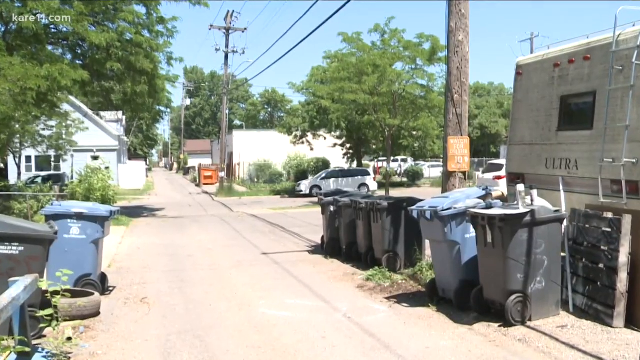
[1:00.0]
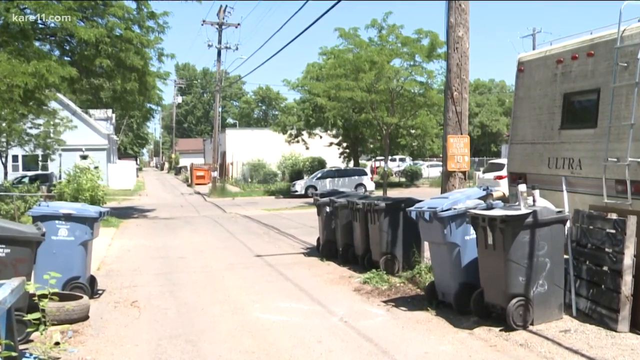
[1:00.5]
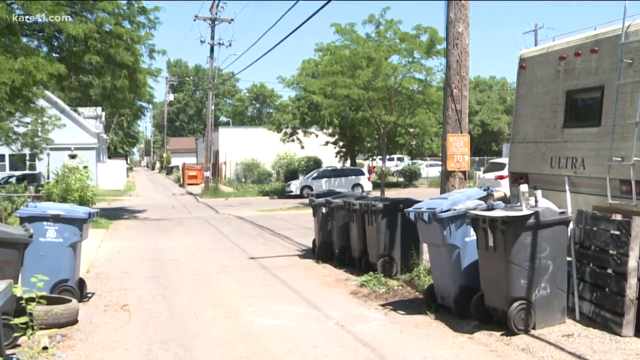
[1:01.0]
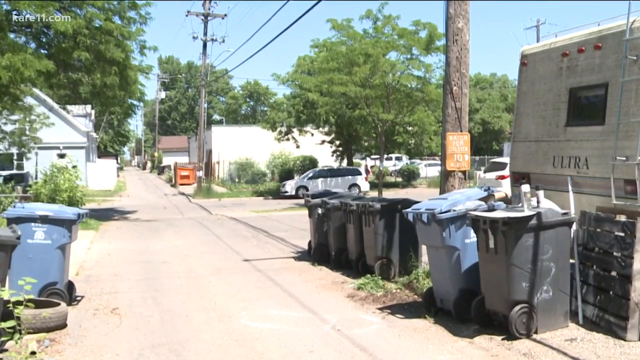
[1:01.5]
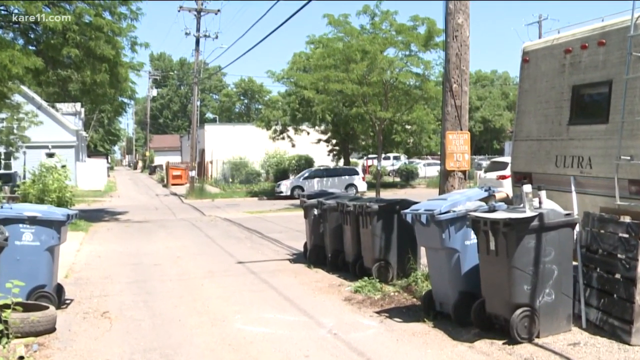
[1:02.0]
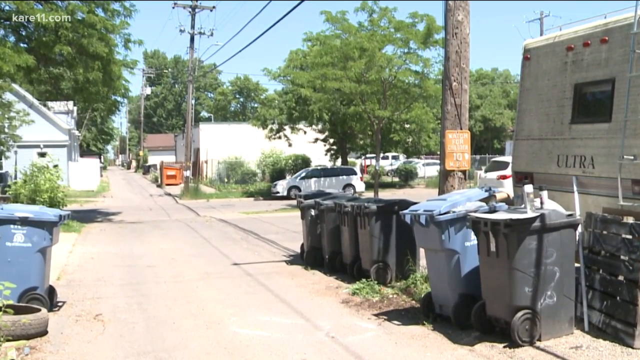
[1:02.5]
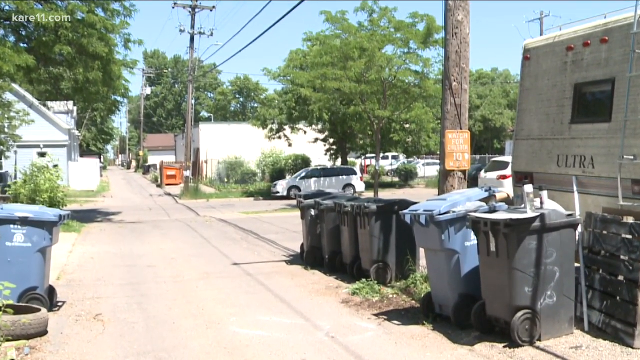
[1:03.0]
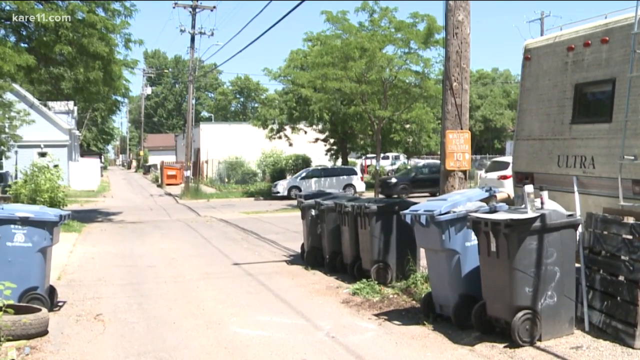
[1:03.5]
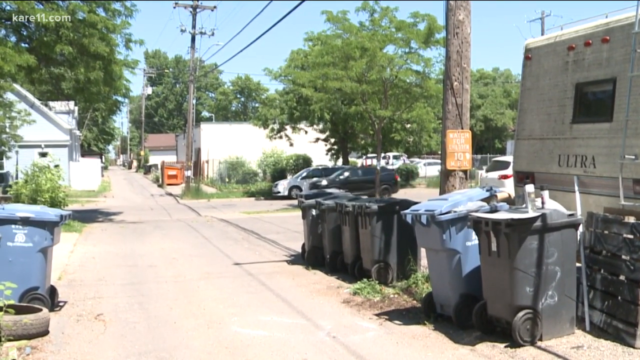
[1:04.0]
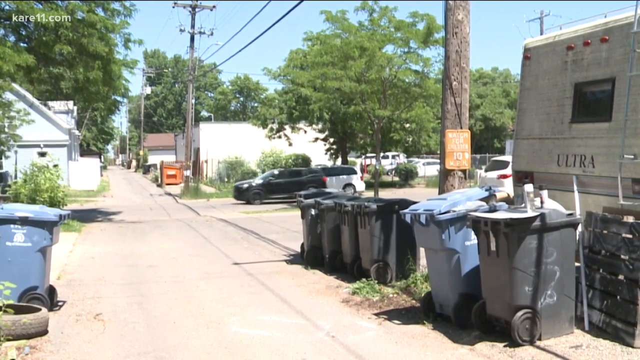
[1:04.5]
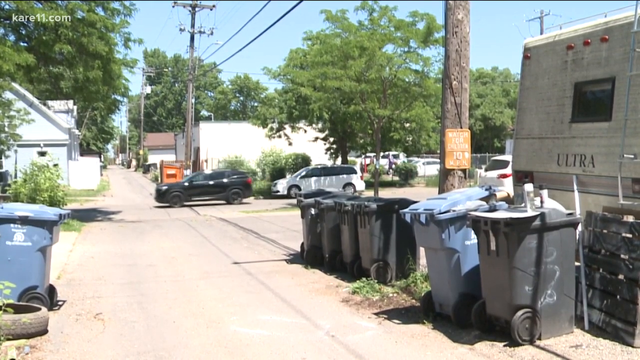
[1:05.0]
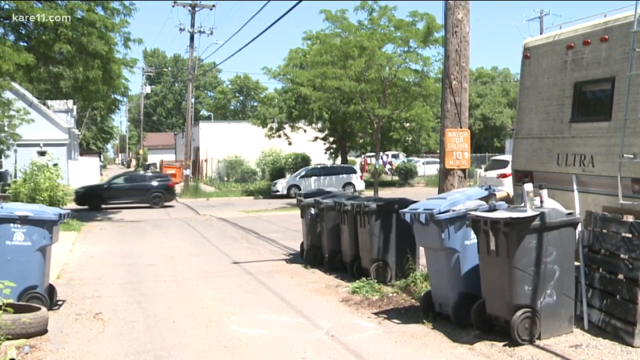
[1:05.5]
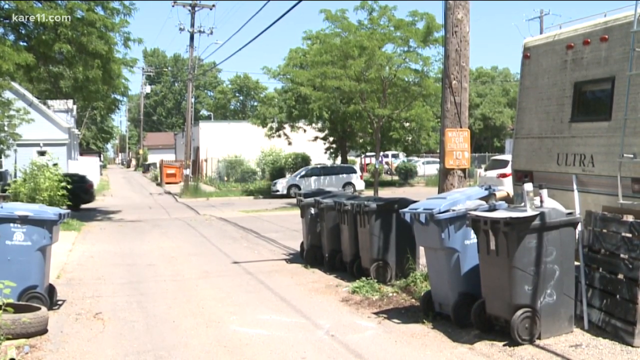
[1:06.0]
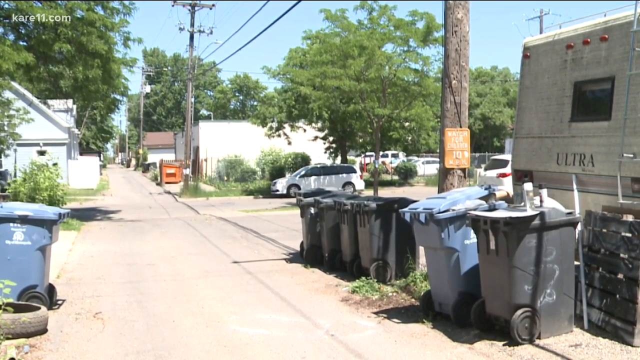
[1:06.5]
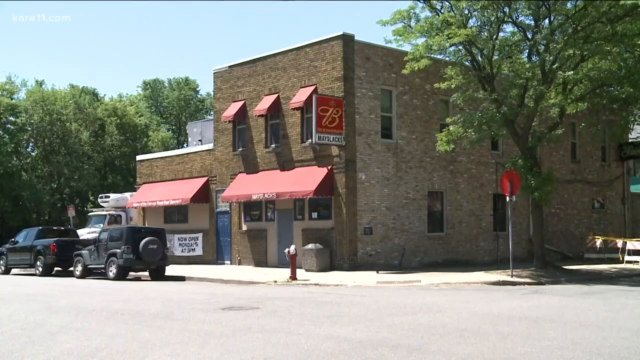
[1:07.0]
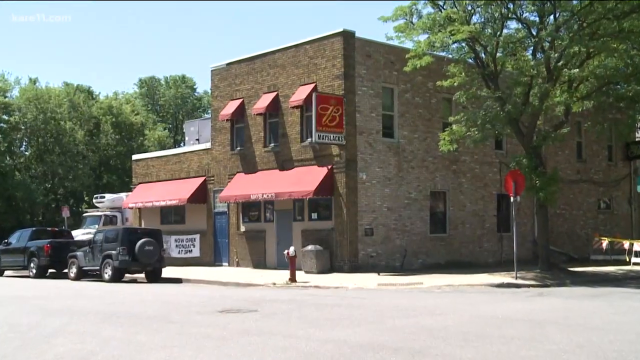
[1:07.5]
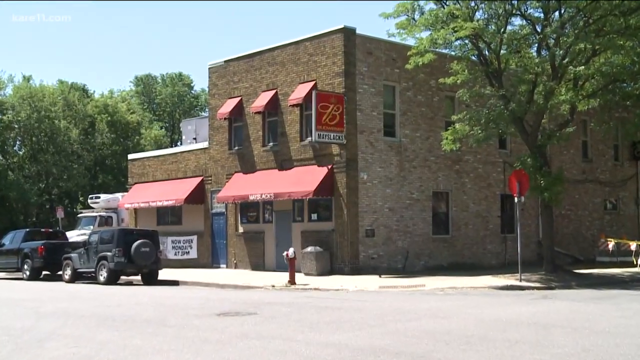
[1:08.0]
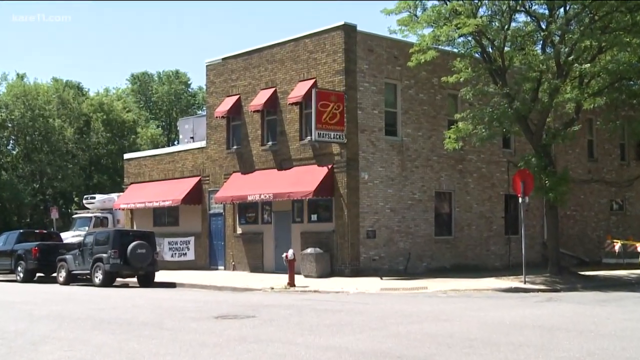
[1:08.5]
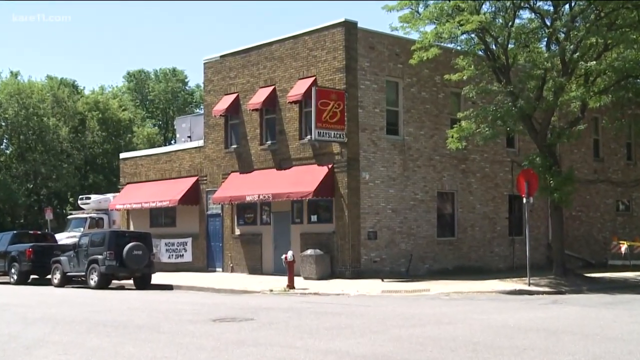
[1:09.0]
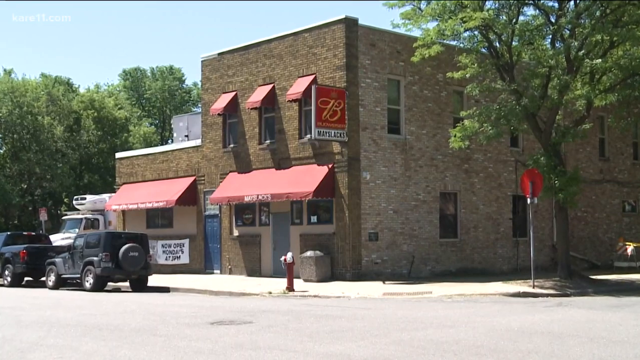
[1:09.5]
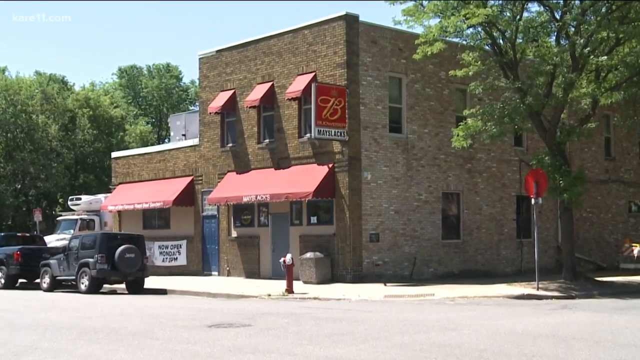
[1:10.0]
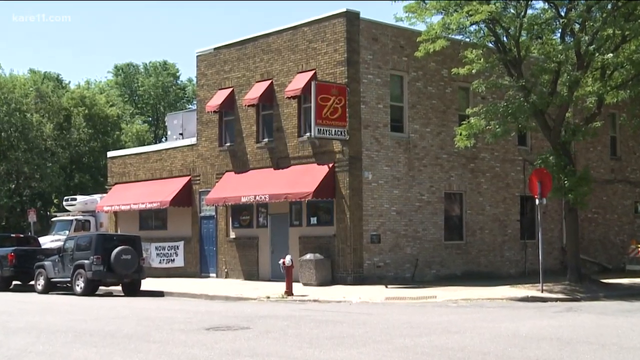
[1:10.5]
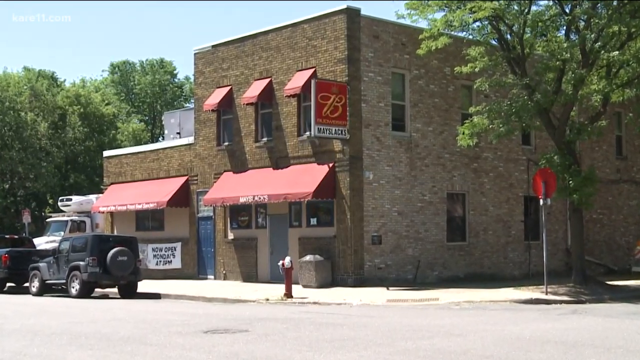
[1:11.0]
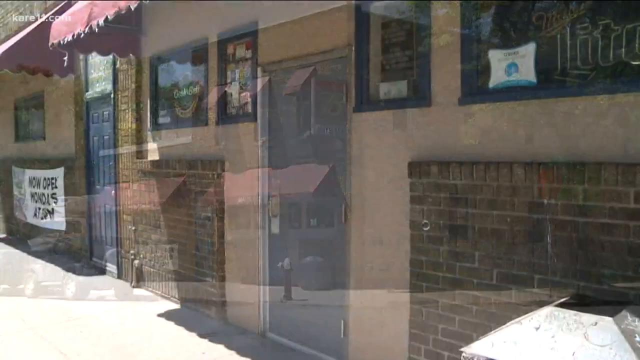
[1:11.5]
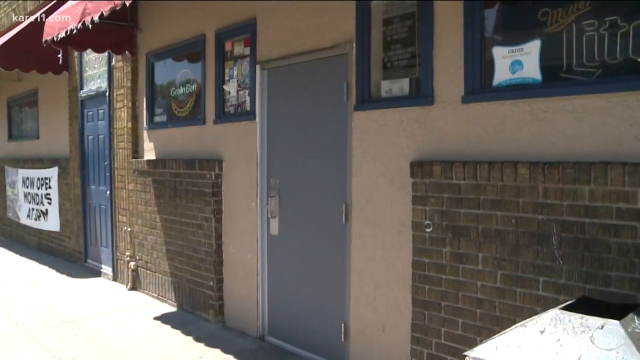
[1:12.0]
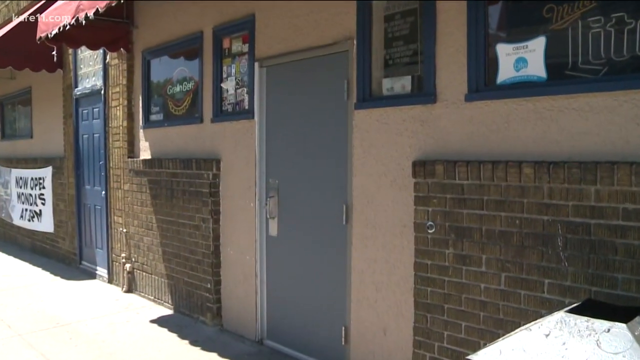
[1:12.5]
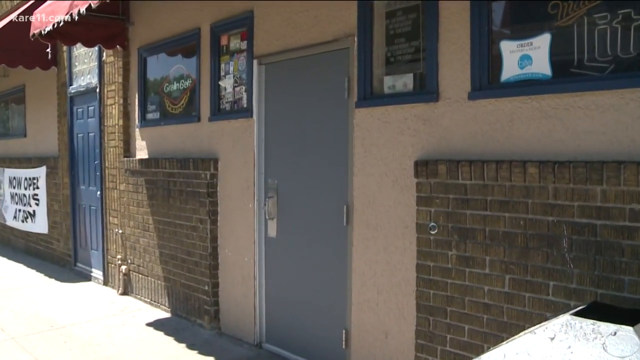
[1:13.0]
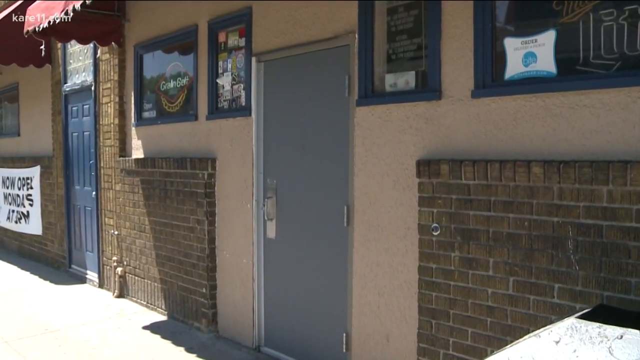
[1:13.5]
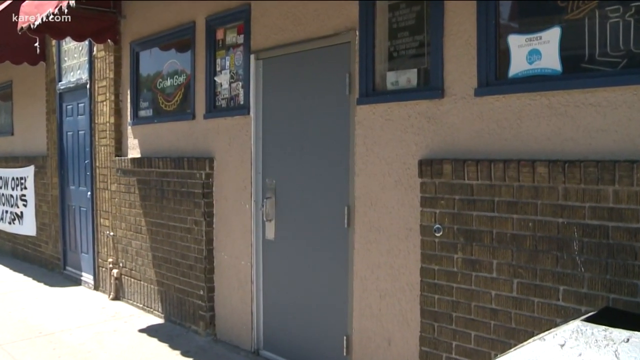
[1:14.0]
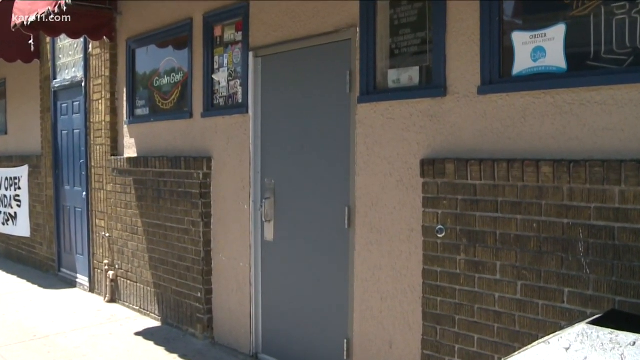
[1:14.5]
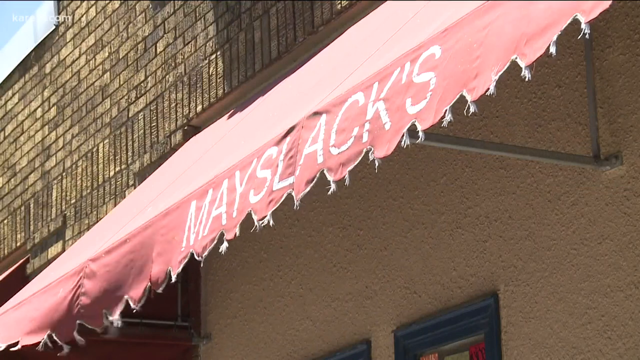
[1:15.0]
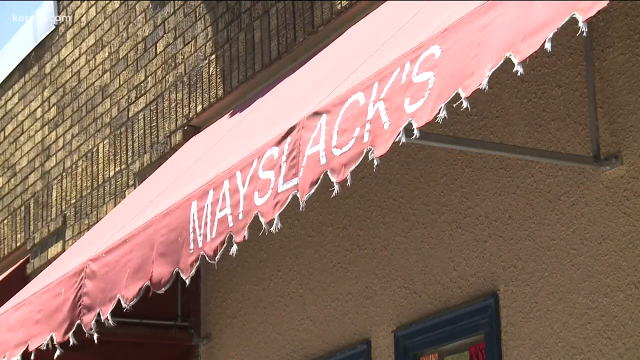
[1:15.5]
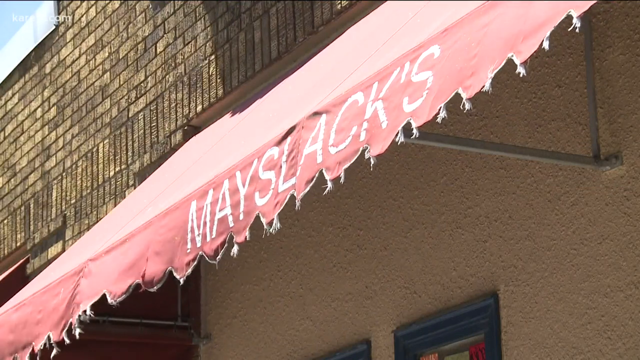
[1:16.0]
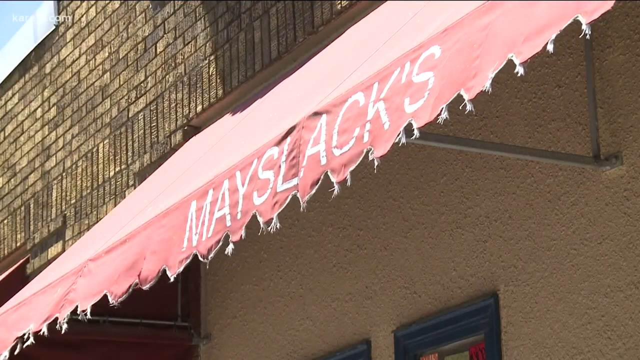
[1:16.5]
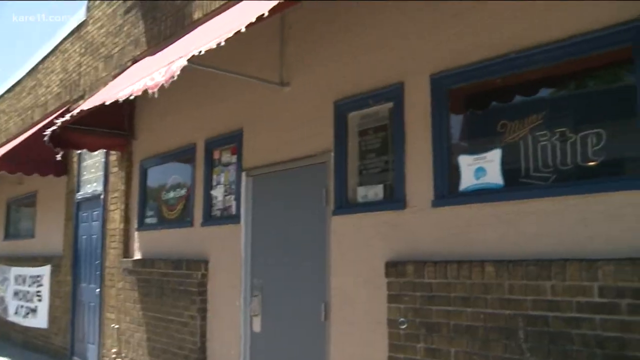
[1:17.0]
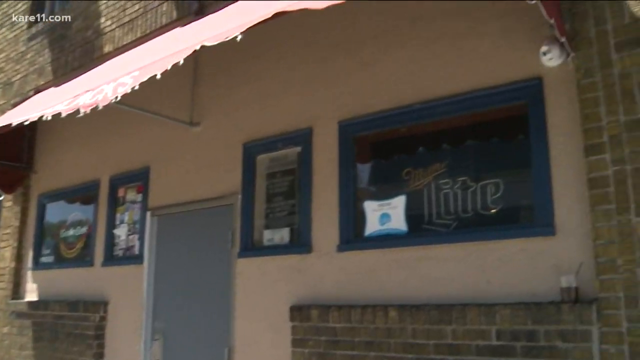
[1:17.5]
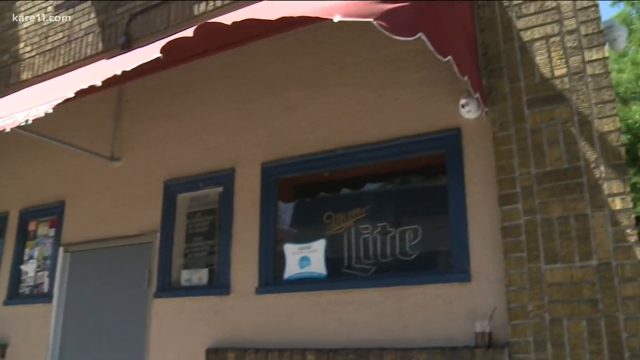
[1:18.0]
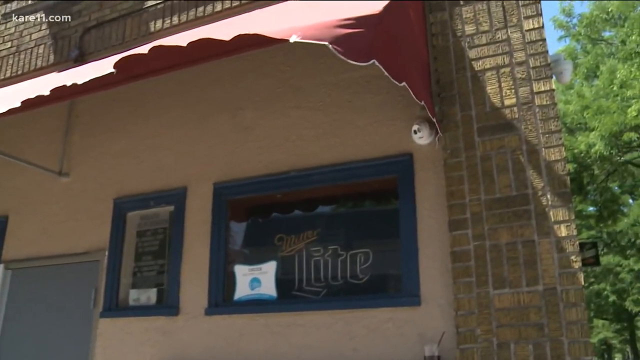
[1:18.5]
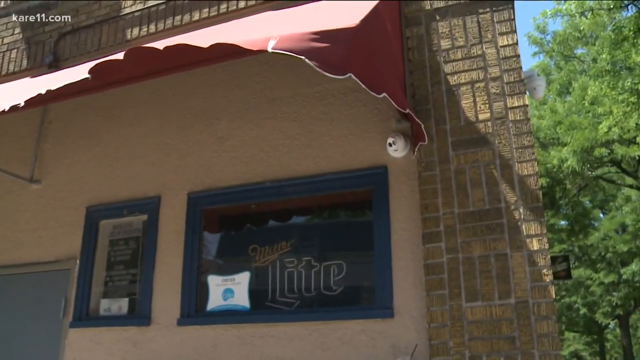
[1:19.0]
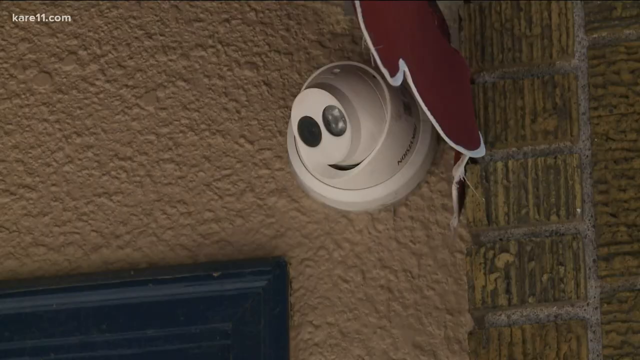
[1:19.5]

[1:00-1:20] The scene remains at the location of the shooting. There is what may be a bar, with a "Miller Lite" sign, and the bar's name, "May Slacks", is at the top of the building. It looks like there is a camera on the building.